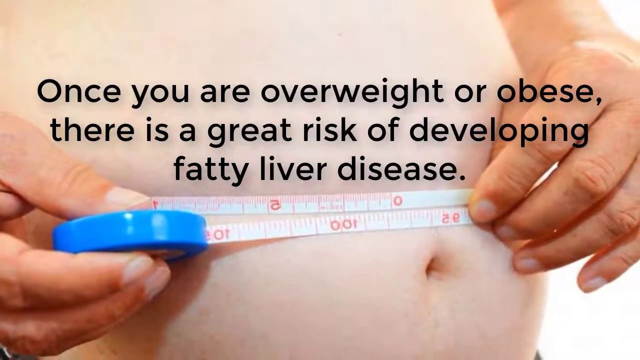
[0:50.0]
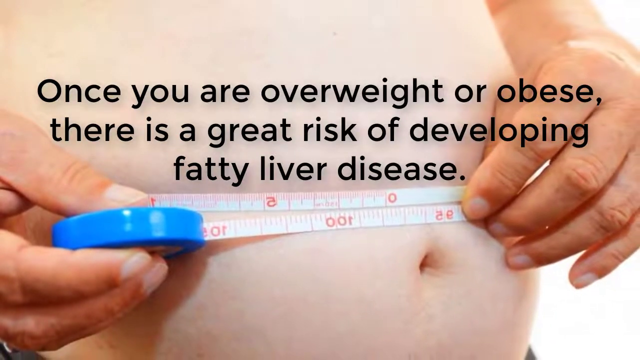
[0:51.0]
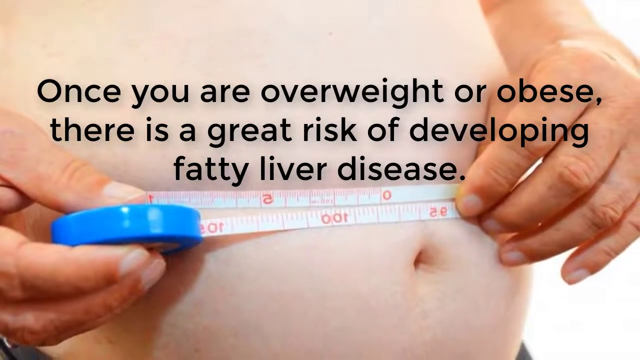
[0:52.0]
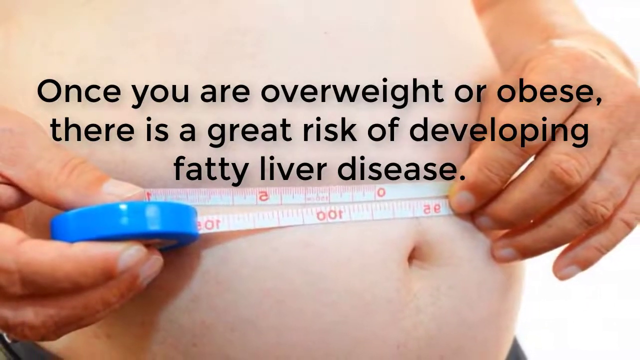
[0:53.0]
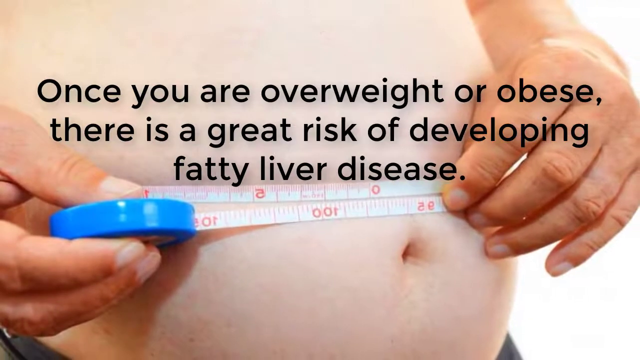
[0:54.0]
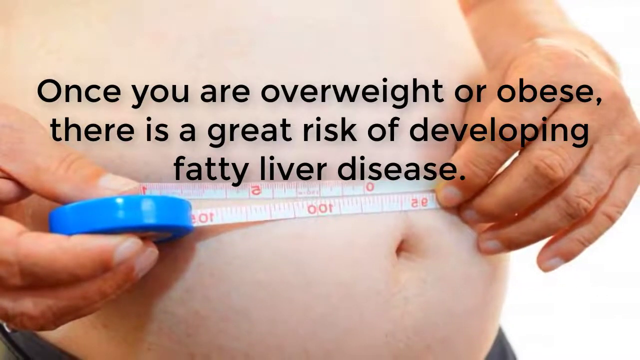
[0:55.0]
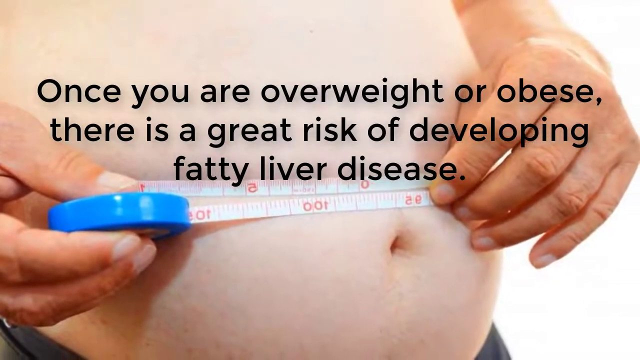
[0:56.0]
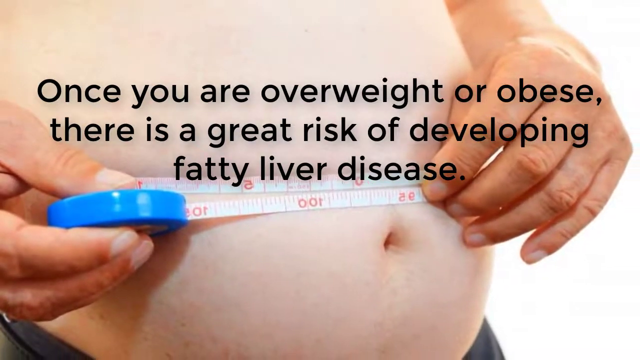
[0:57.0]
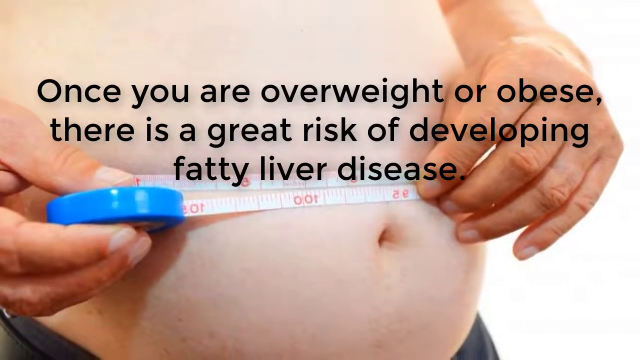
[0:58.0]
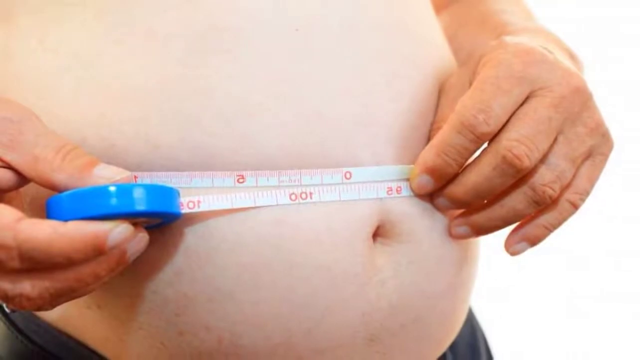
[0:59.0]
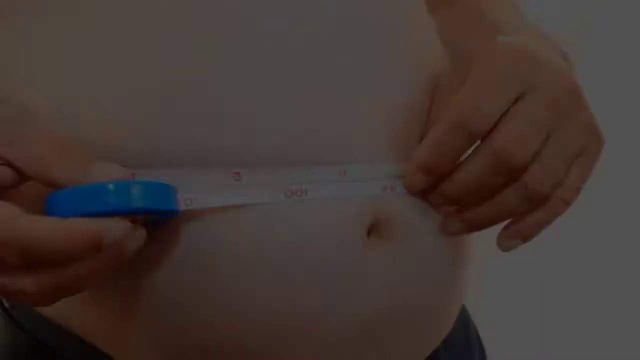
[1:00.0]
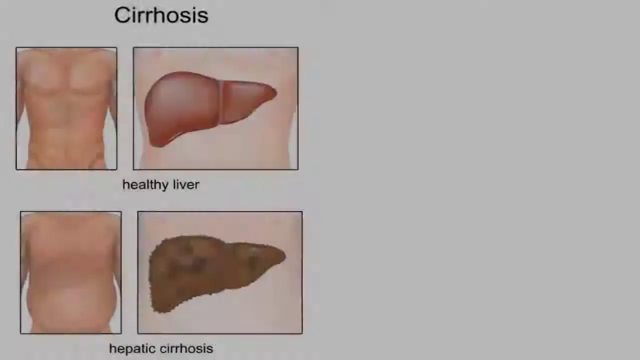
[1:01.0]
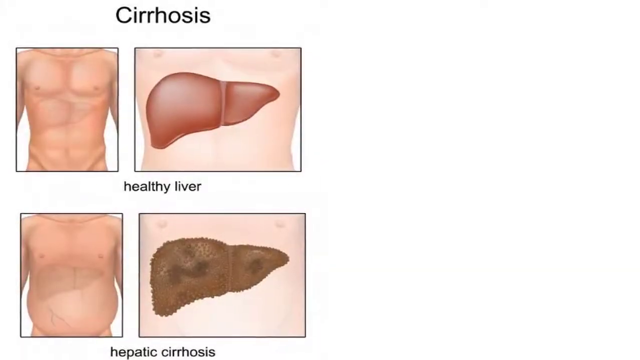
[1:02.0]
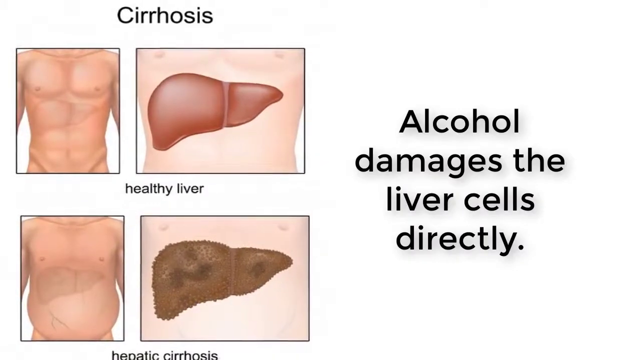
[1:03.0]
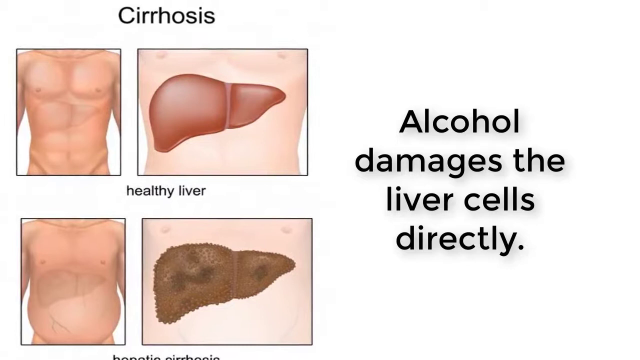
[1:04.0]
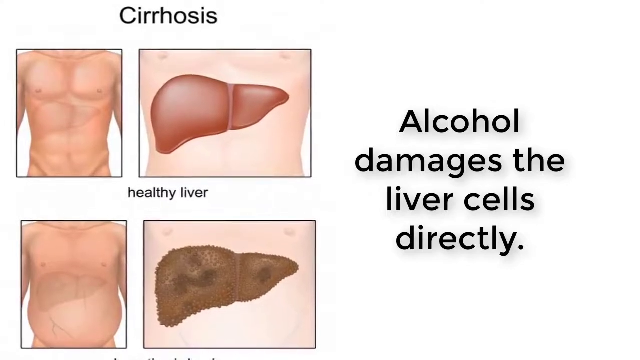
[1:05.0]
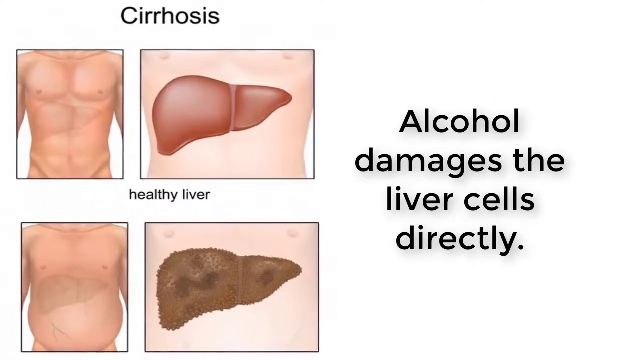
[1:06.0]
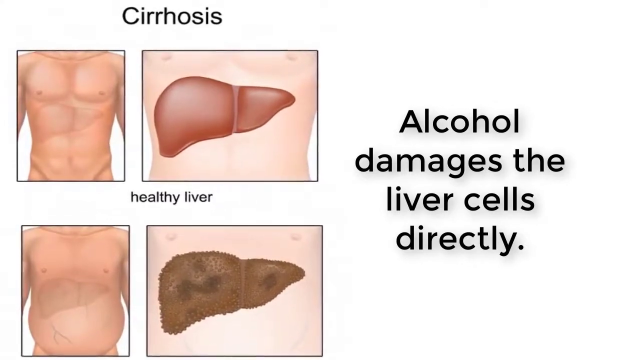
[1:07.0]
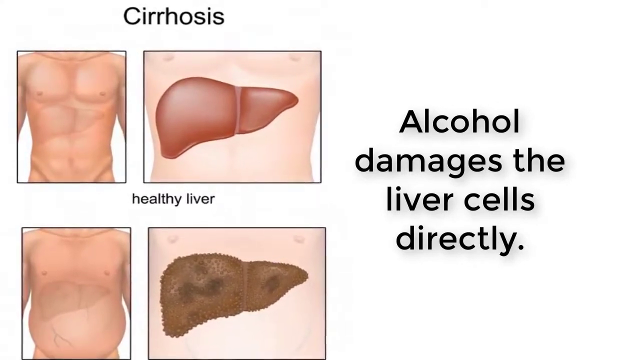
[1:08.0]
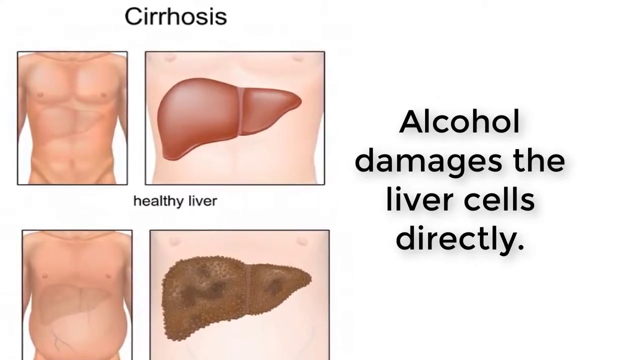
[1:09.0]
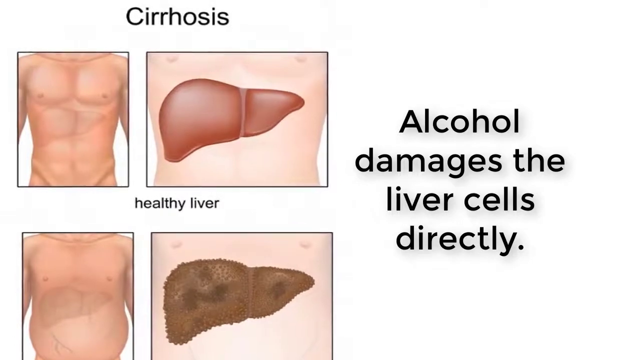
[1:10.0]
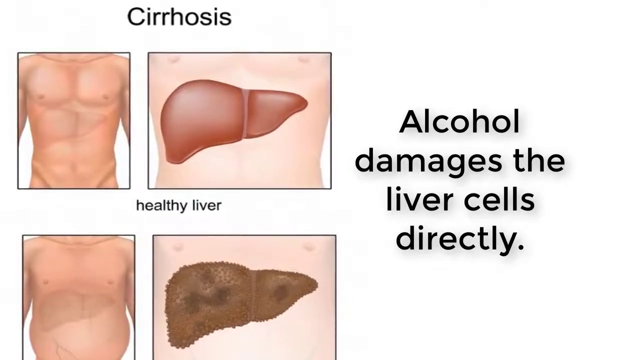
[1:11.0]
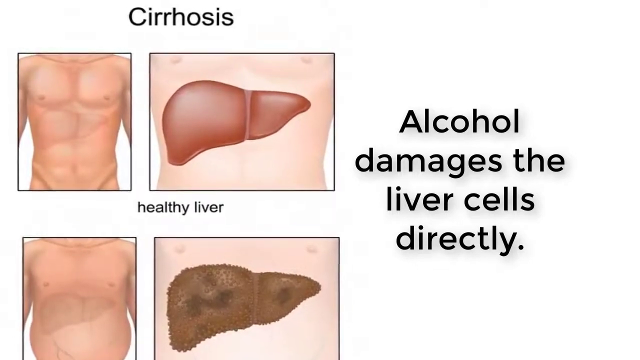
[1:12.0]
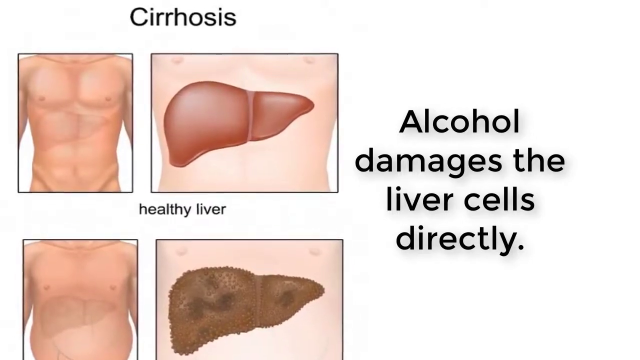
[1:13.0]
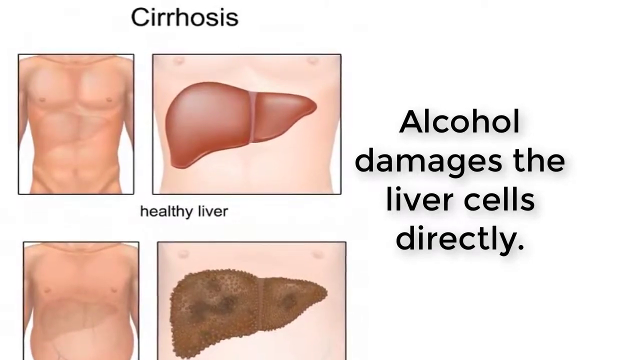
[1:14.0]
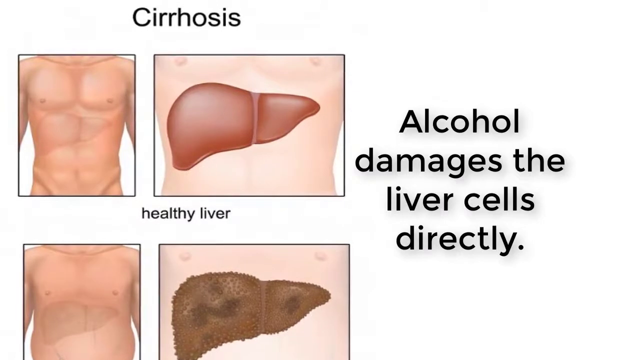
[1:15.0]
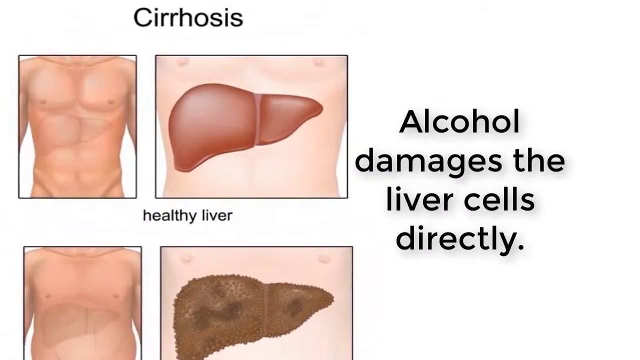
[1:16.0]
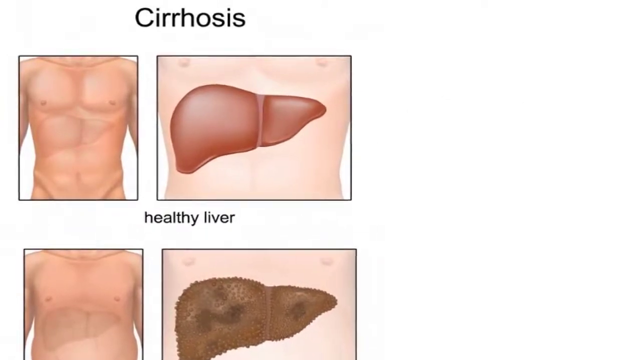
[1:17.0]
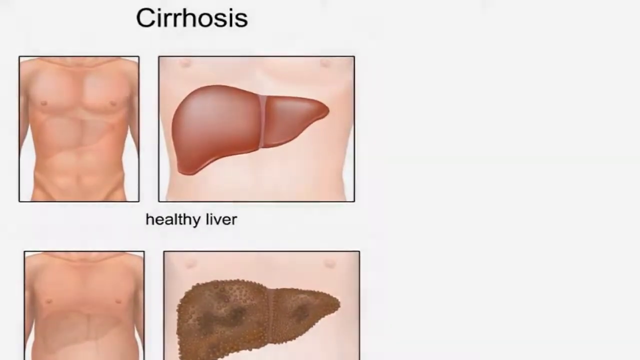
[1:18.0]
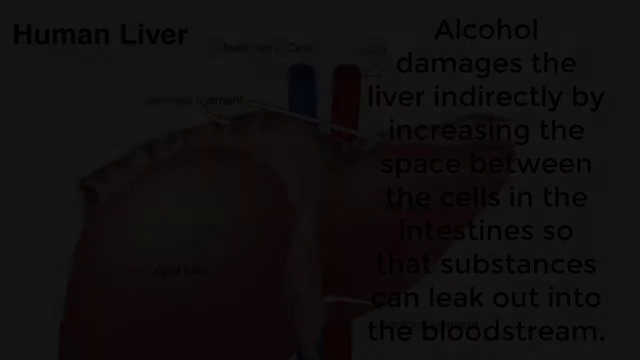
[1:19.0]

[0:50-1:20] A person's bare midsection is shown, with a measuring tape held between the fingers of each hand just above the belly button. Black text on the screen reads "Once you are overweight or obese, there is a great risk of developing fatty liver disease." The camera pans out, showing a little more of the person, who appears to be standing toward the right side of the screen. The next screen has "Cirrhosis" at the top. On the left side are four pictures, two at the top and two at the bottom. The first is a naked torso with the outline of where the liver should be; next to it is a brown liver labeled "healthy liver" underneath. Below are another torso showing where the liver should be and, next to it, a very dark brown liver with no visible words beneath it, presumably an unhealthy liver. Text to the right of the pictures reads "Alcohol damages the liver cells directly".